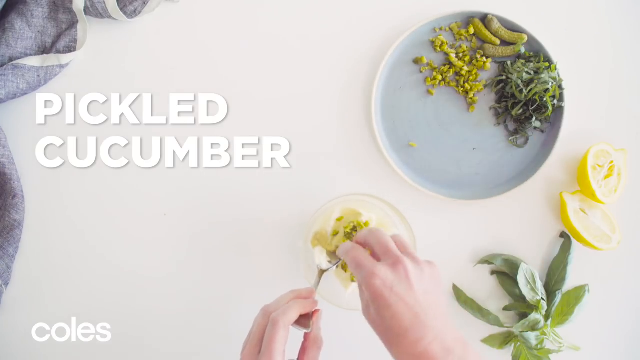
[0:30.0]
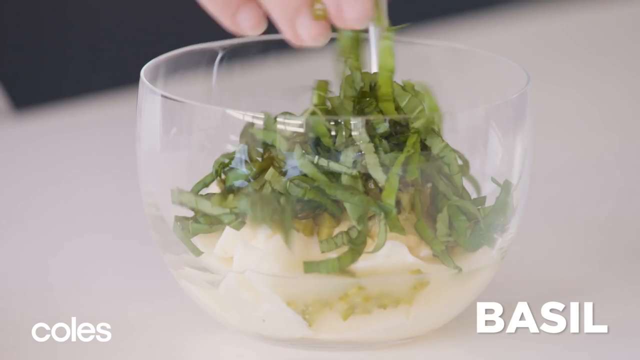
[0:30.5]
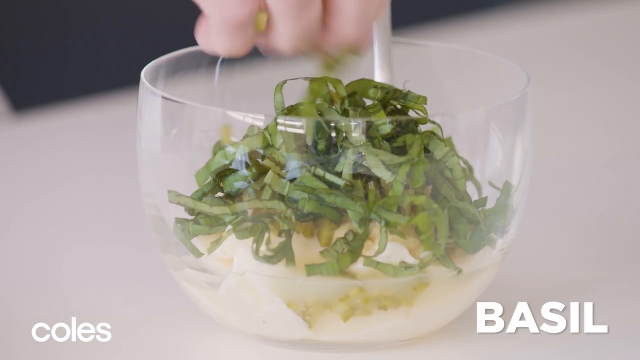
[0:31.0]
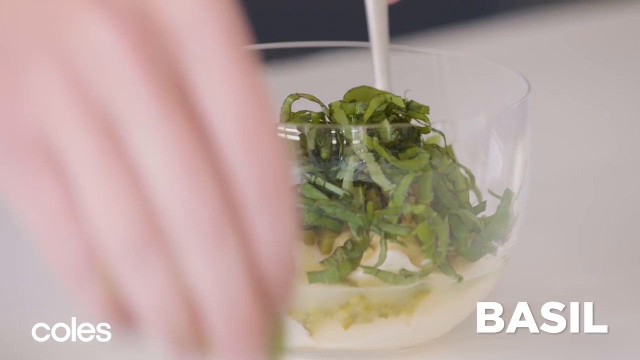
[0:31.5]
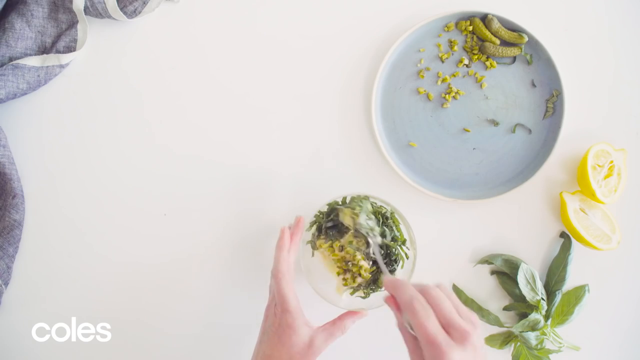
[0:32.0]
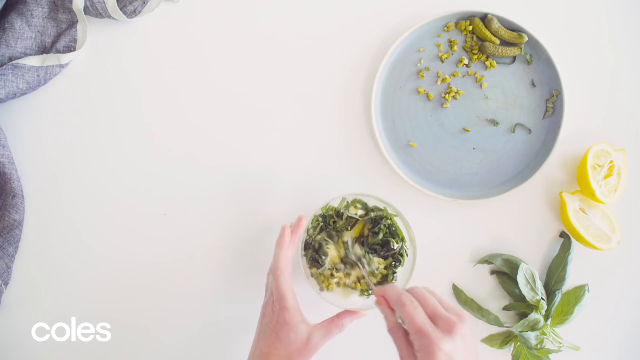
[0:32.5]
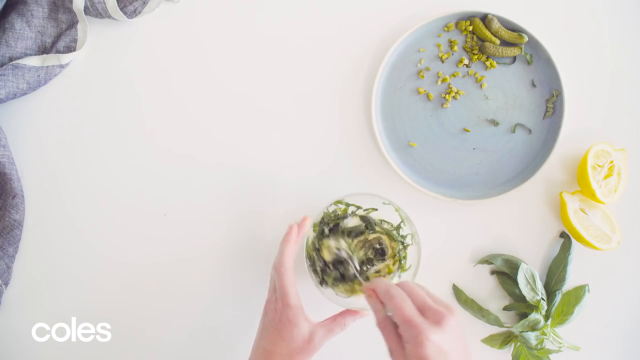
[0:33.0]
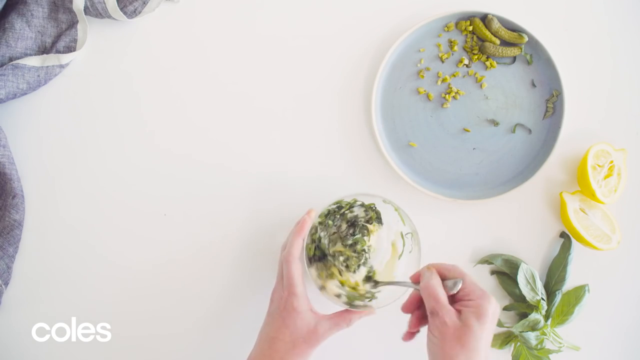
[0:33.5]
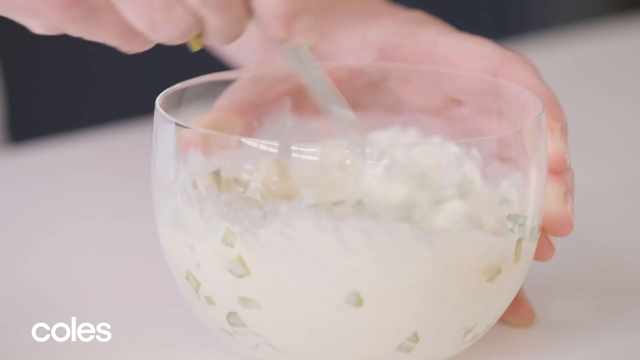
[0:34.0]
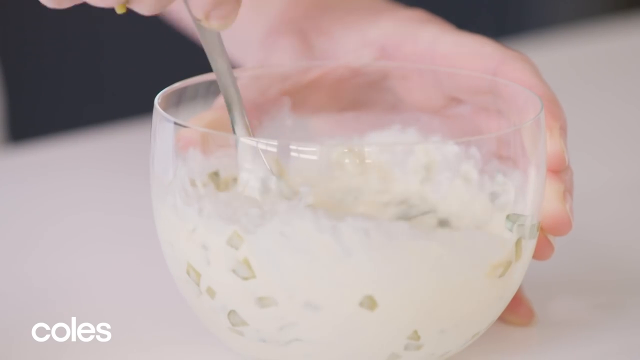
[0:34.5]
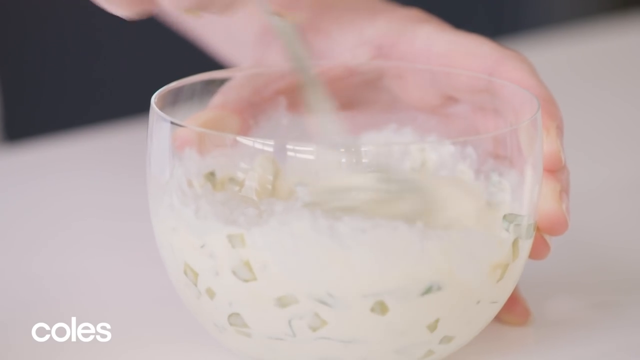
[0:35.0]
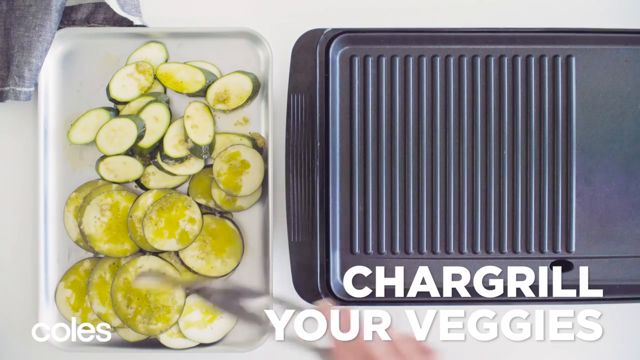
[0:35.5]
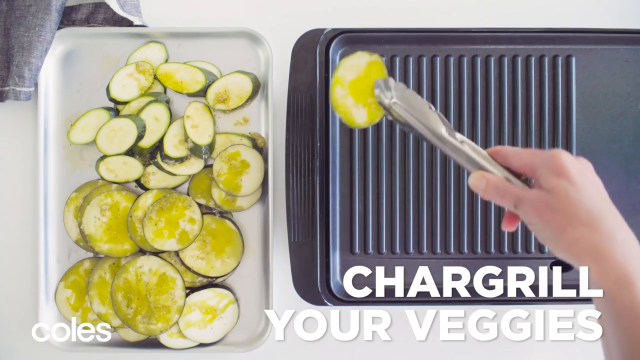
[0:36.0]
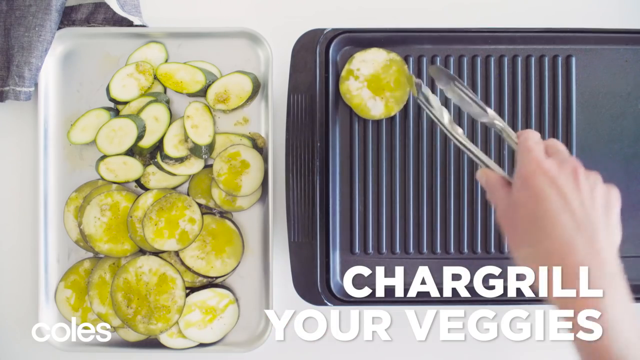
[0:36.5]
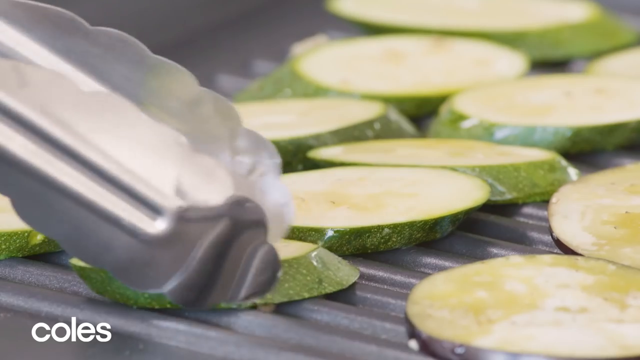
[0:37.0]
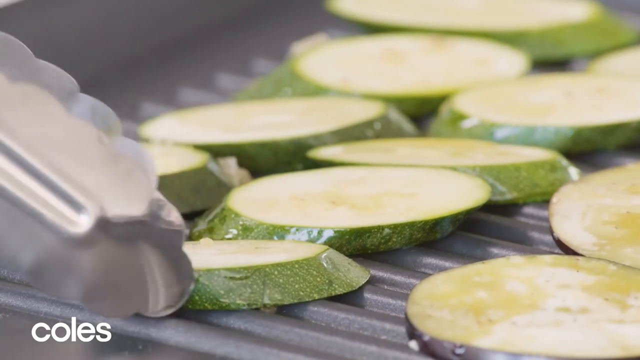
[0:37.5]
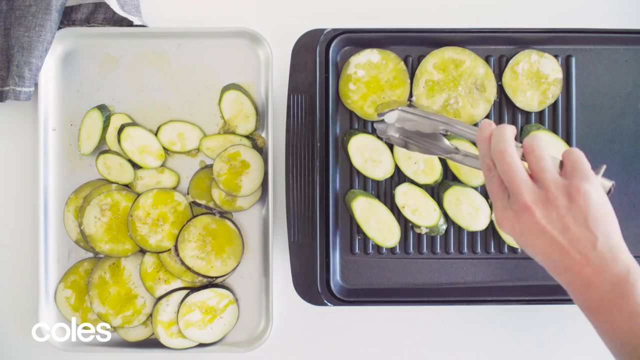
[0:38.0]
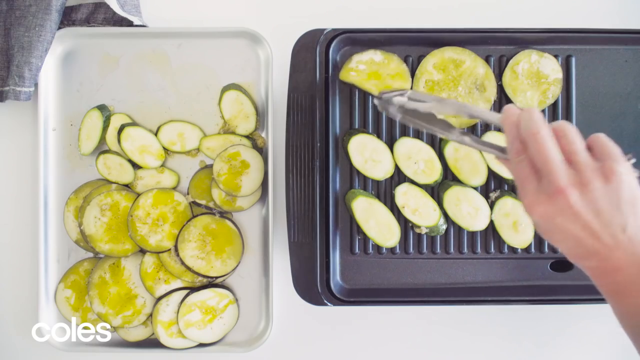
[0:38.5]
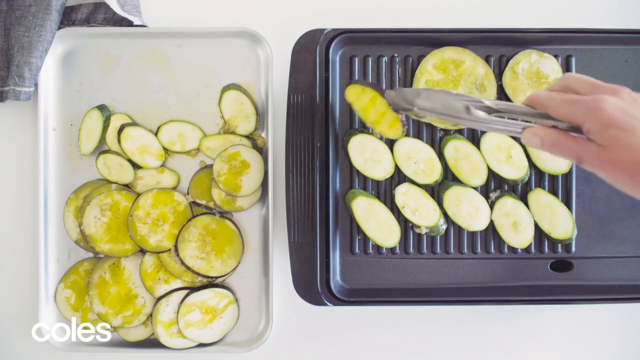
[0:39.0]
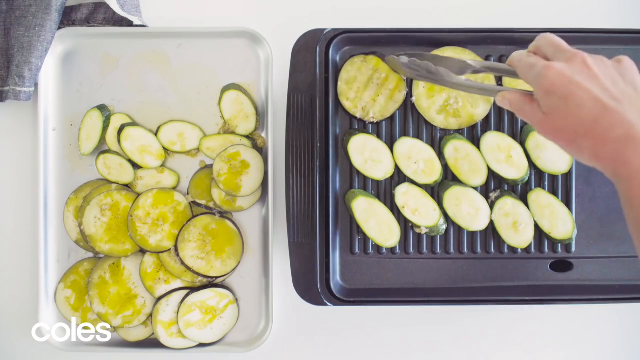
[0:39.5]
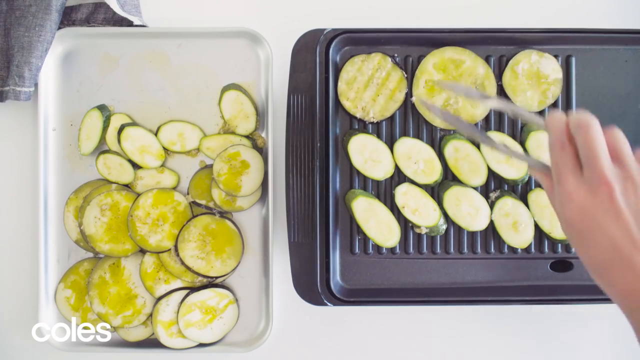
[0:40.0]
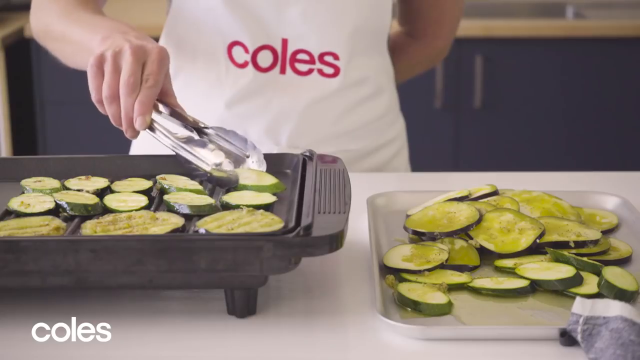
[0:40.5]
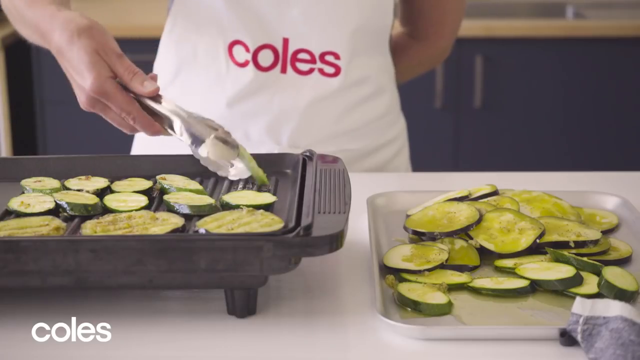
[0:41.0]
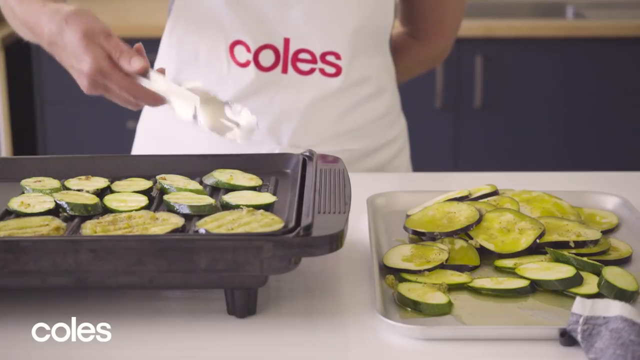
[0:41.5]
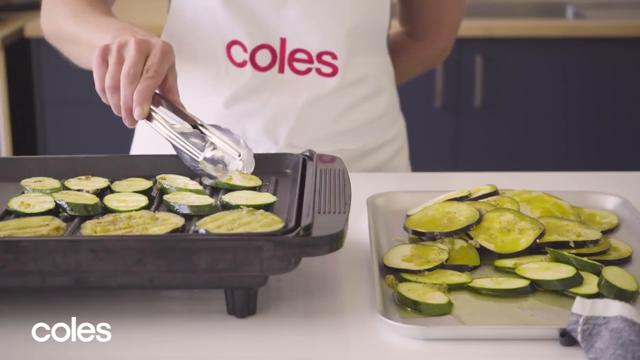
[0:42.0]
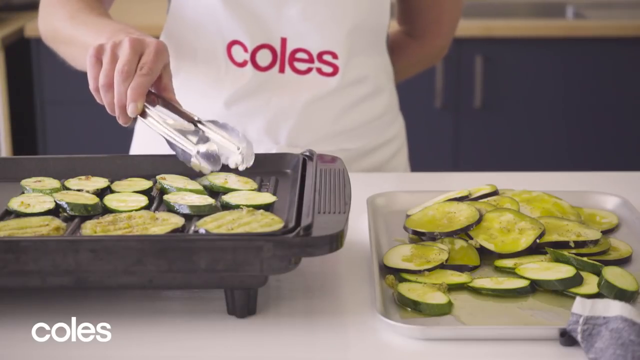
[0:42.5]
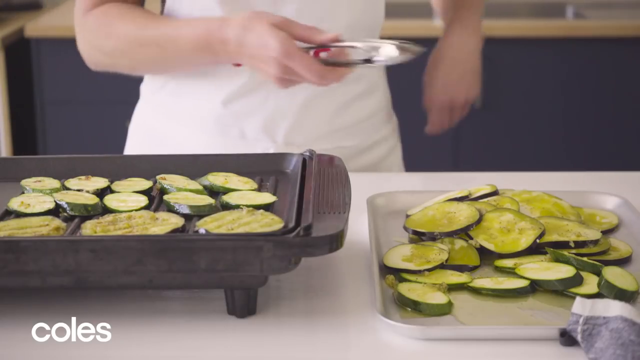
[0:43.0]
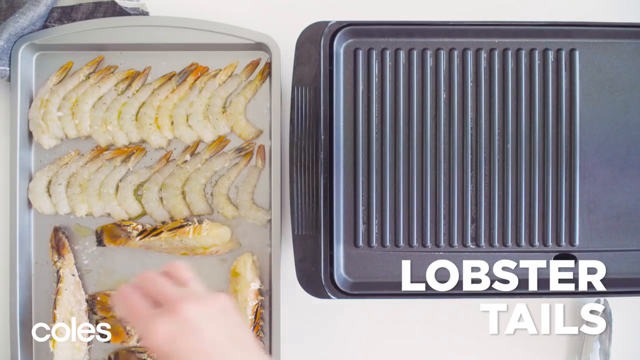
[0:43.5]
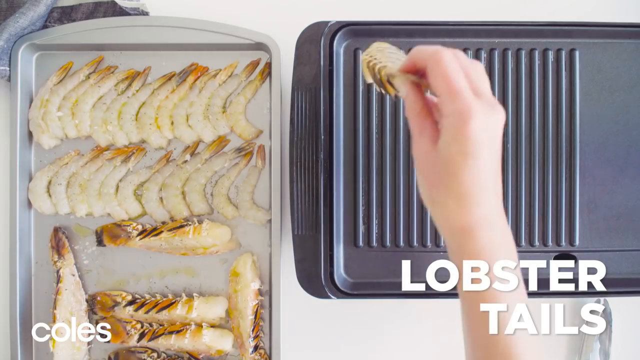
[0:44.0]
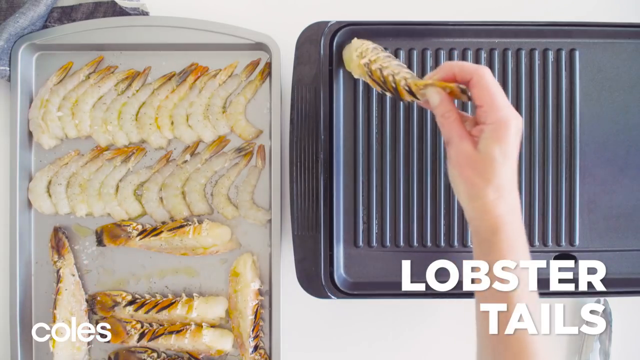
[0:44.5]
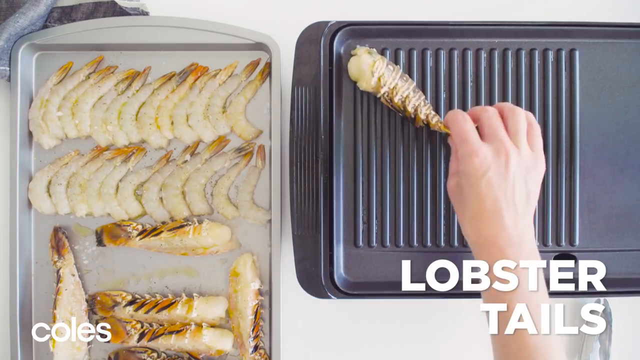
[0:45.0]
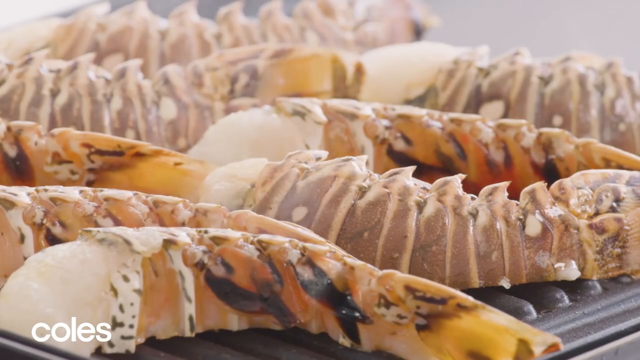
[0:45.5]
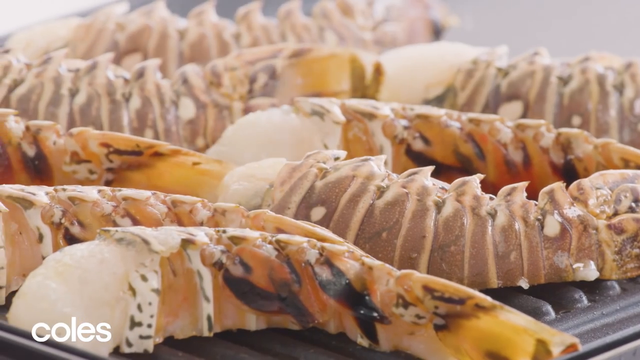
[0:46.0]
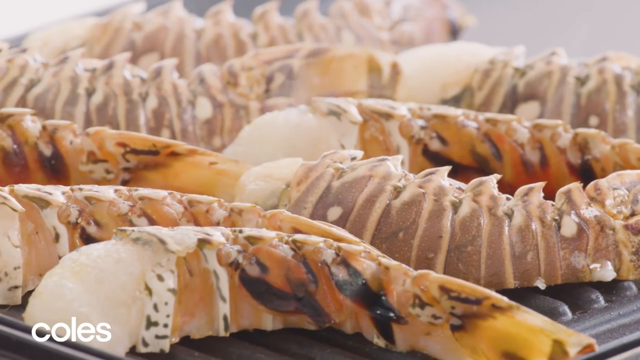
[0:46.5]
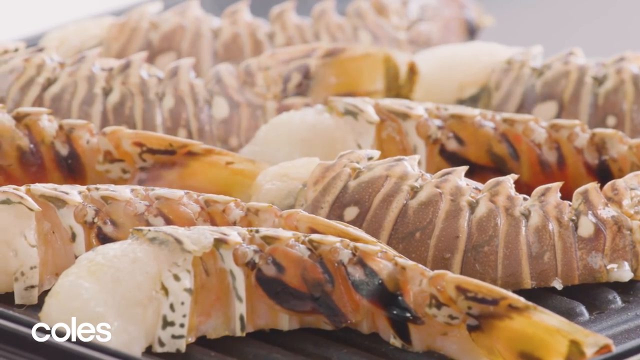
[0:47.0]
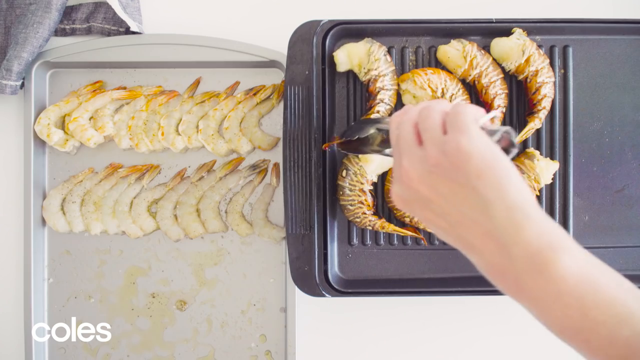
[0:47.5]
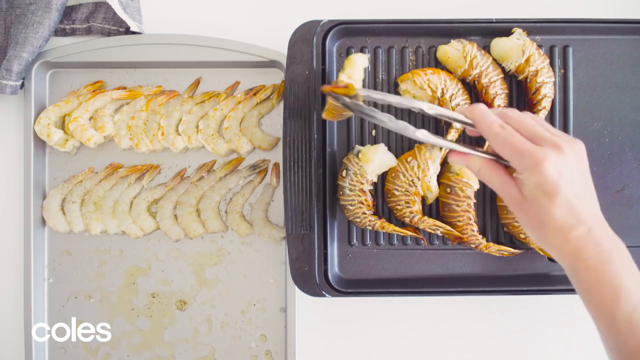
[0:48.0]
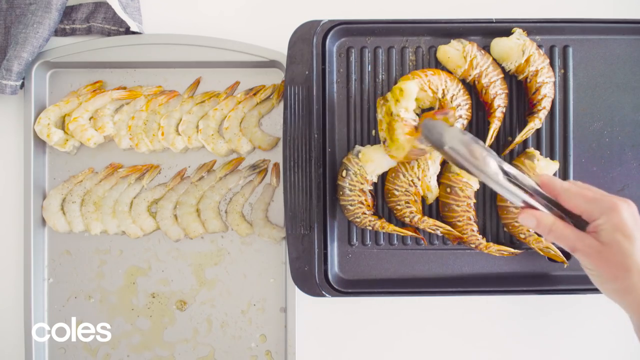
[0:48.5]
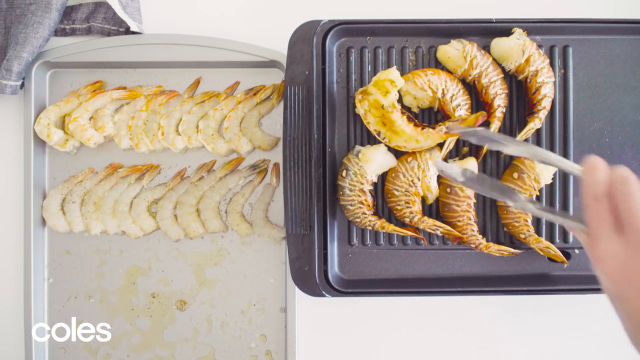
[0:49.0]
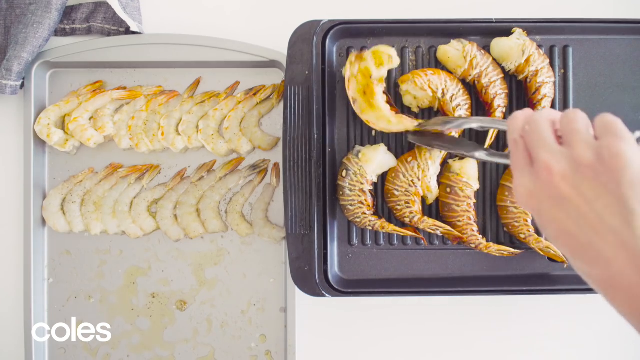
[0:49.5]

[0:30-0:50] The steps of making the seafood continue as basil is captioned on the screen and added to a main bowl of food. From a top-down view, hands stir it all together. A top-down view then shows a grill or frying pan with the caption "chargrill your veggies", as a person with a spatula puts their veggies on the chargrill and flips them over one by one. Lobster tails are then shown as the person places them on the chargrill one at a time. To the left of the chargrill are the platter and a pan, as the pieces are put on and each one is flipped over to the other side.